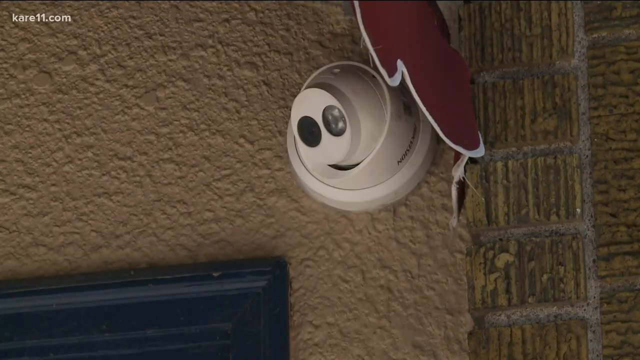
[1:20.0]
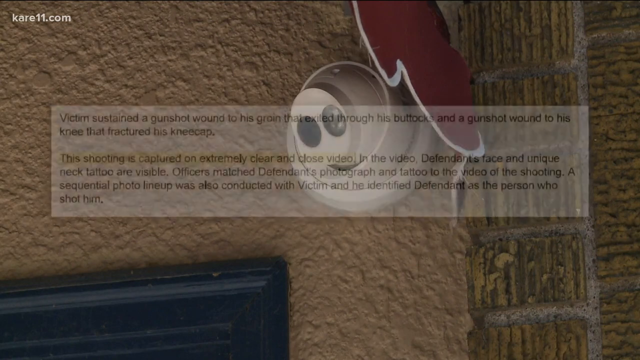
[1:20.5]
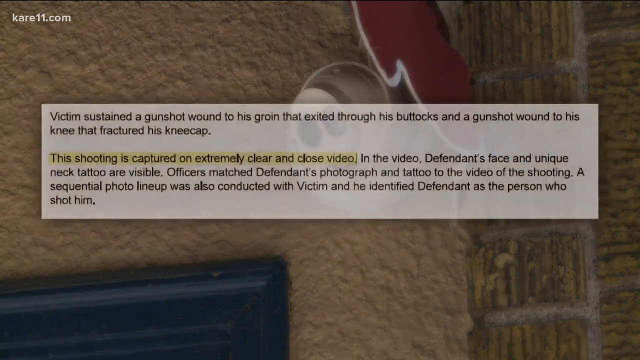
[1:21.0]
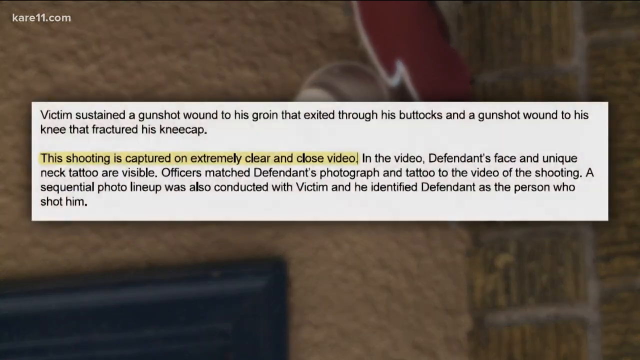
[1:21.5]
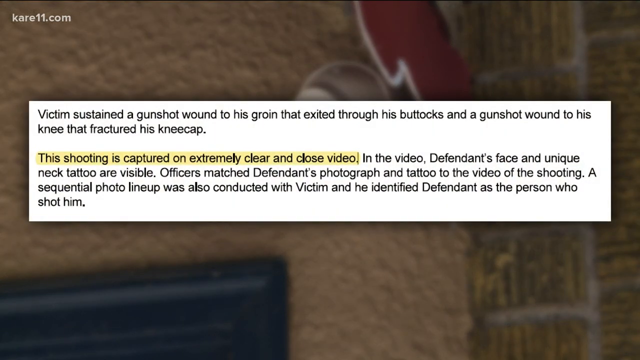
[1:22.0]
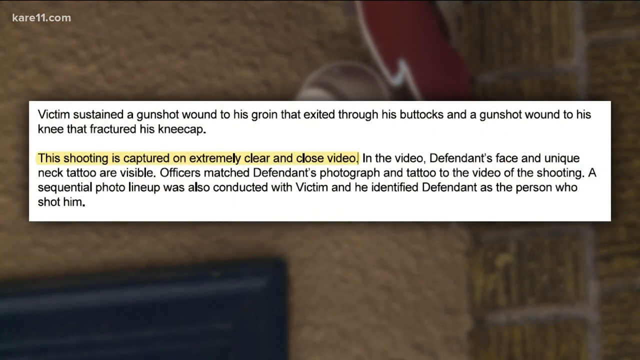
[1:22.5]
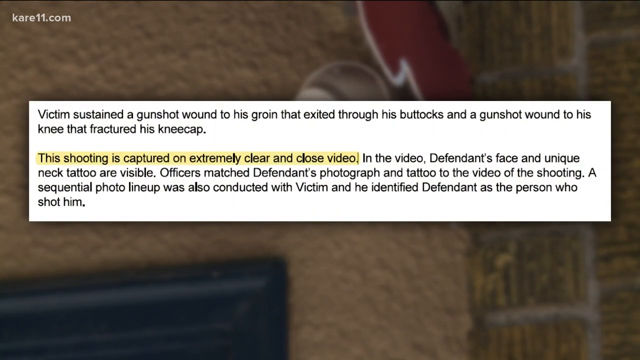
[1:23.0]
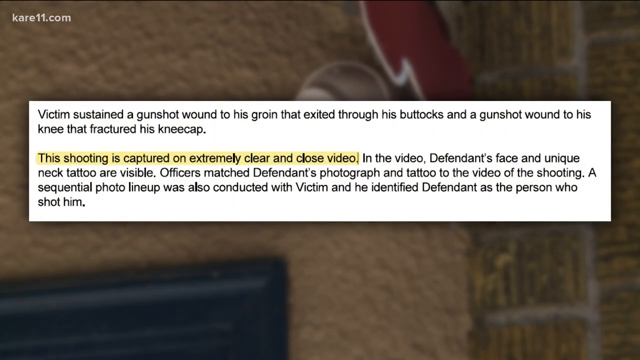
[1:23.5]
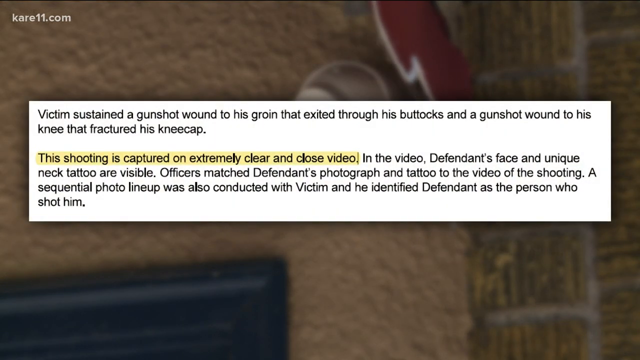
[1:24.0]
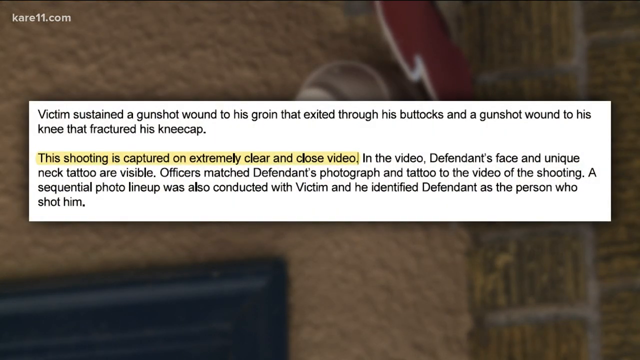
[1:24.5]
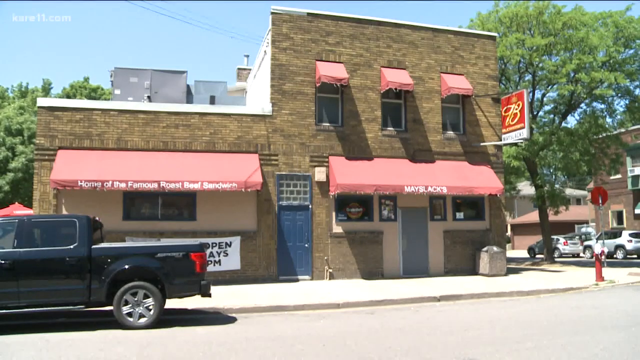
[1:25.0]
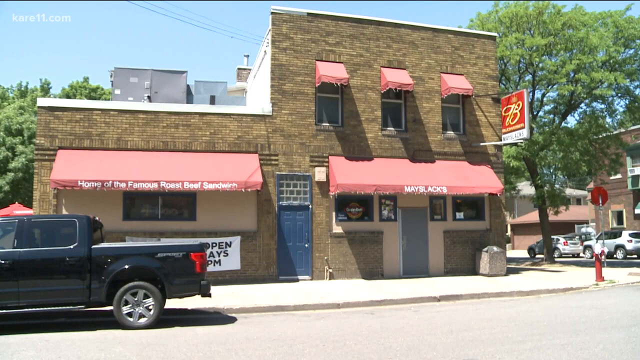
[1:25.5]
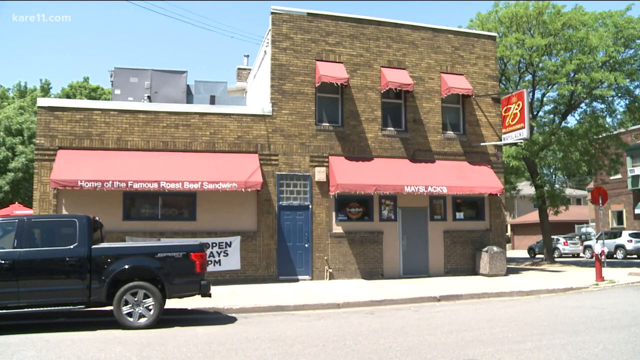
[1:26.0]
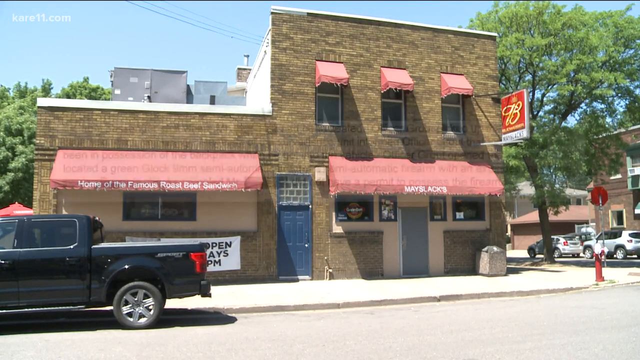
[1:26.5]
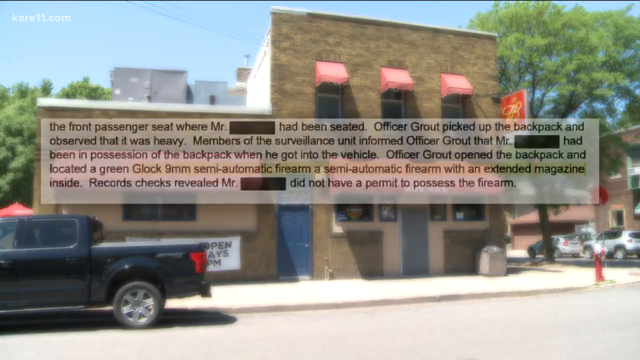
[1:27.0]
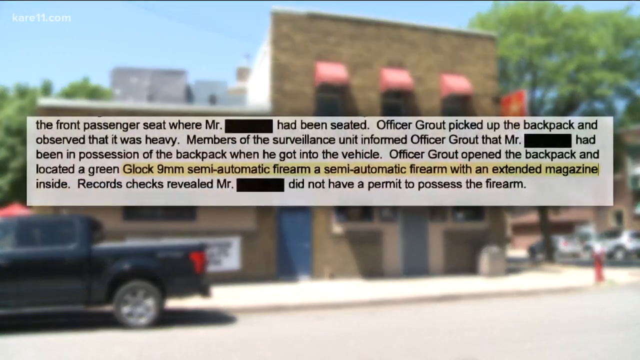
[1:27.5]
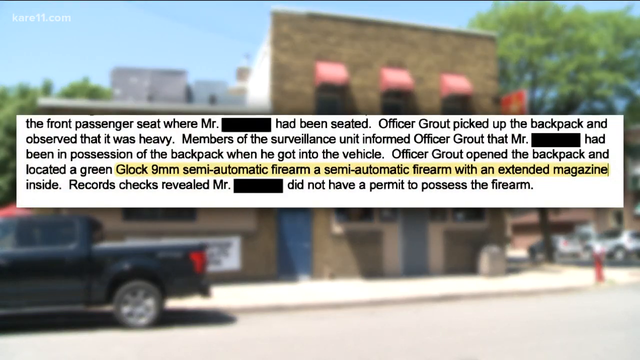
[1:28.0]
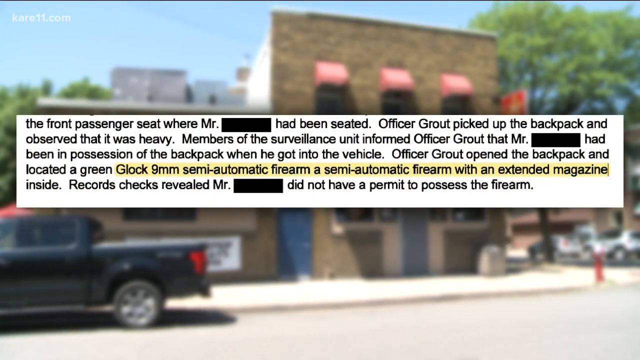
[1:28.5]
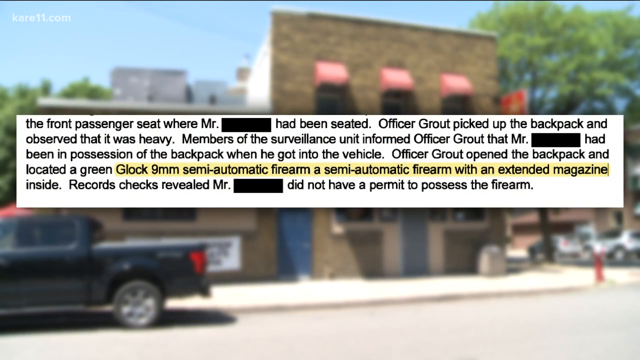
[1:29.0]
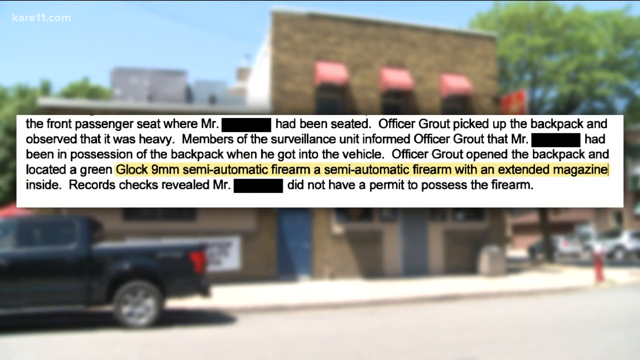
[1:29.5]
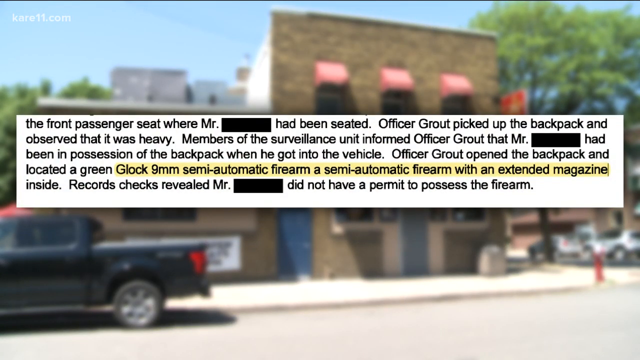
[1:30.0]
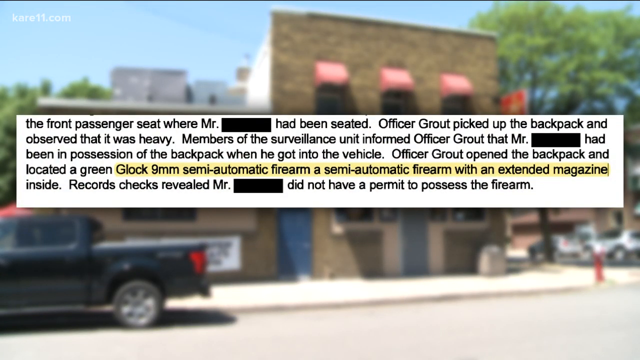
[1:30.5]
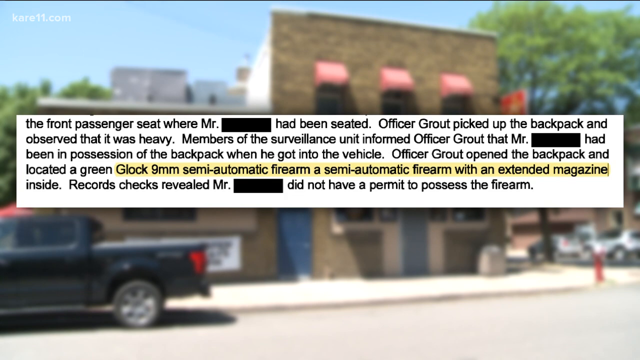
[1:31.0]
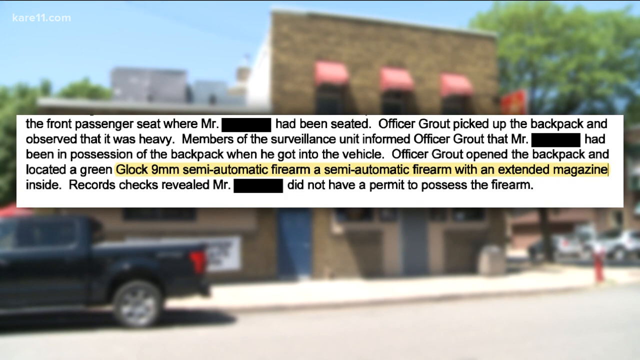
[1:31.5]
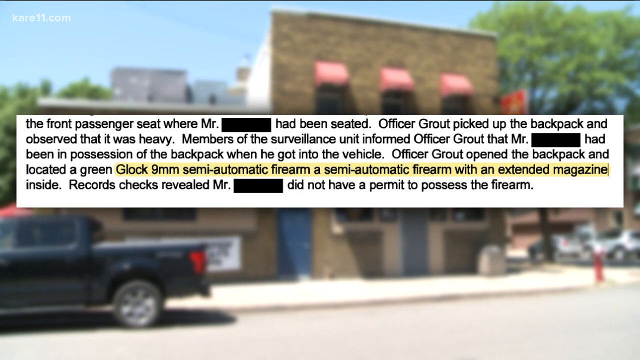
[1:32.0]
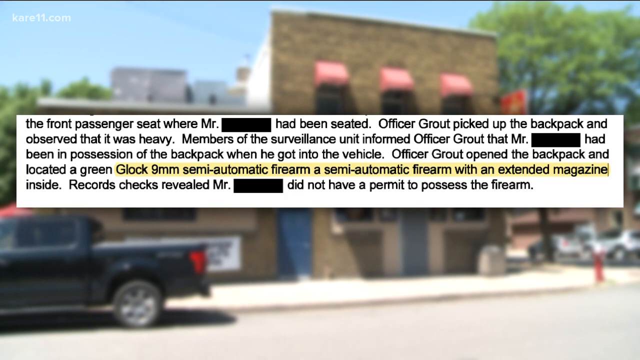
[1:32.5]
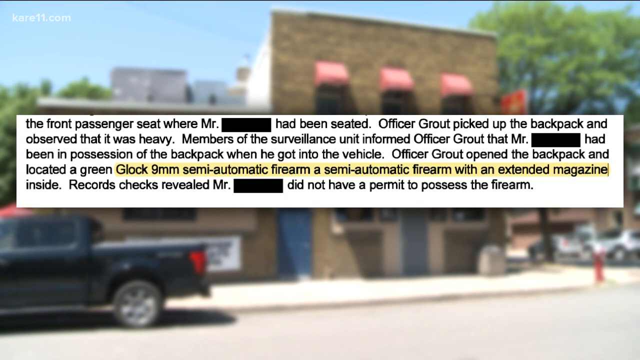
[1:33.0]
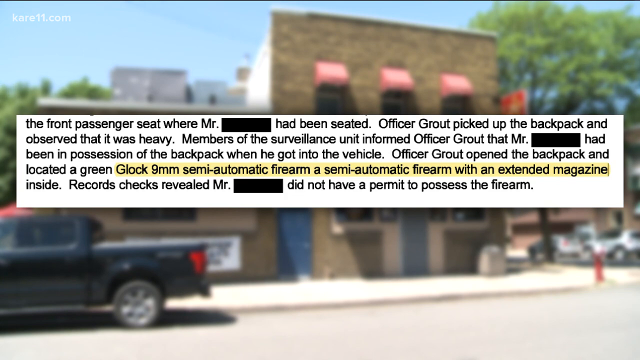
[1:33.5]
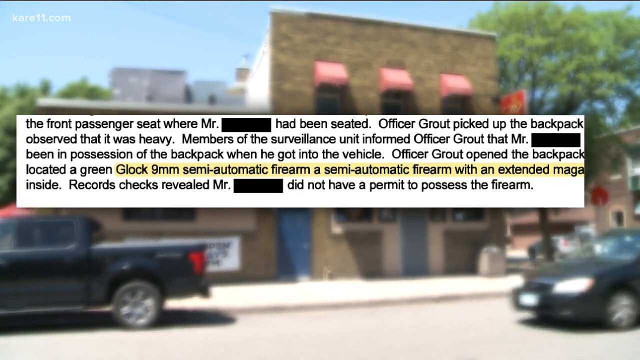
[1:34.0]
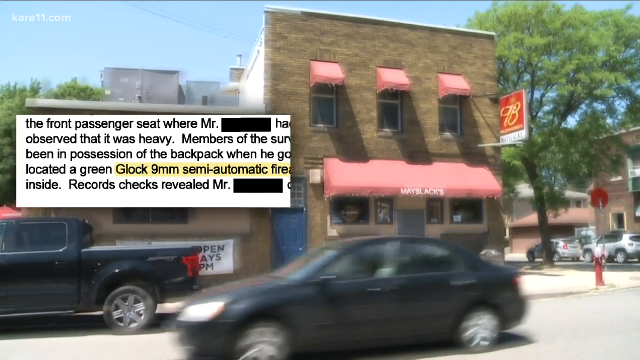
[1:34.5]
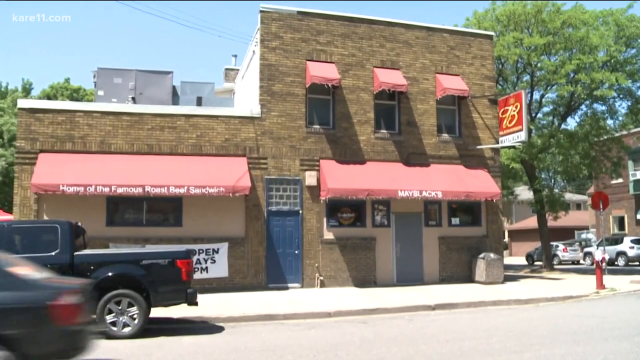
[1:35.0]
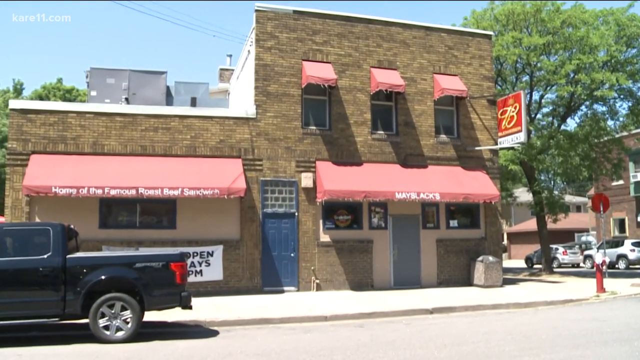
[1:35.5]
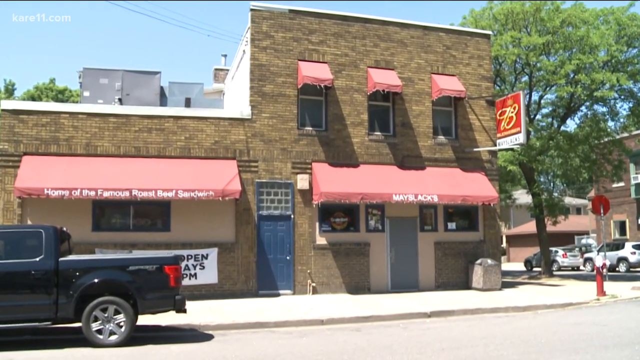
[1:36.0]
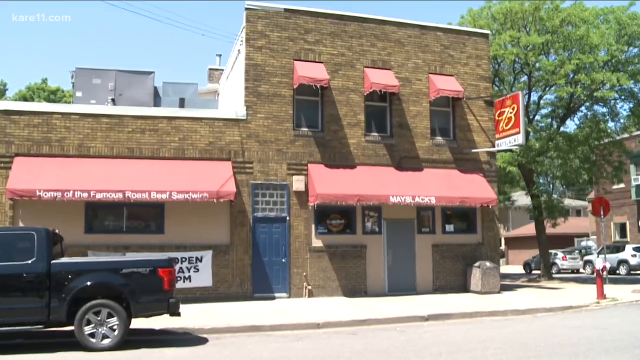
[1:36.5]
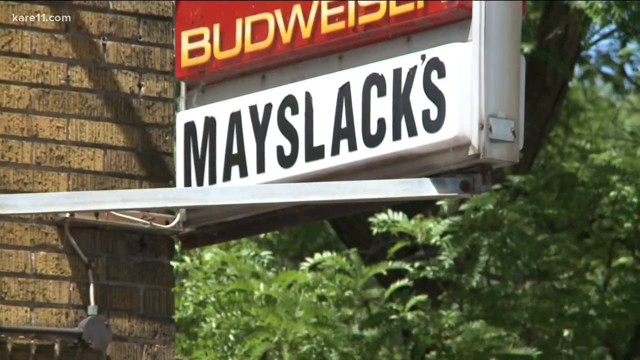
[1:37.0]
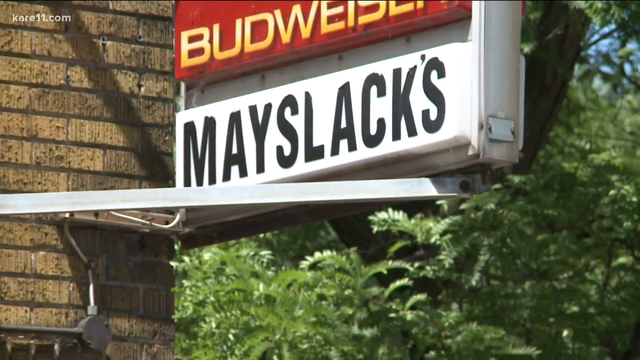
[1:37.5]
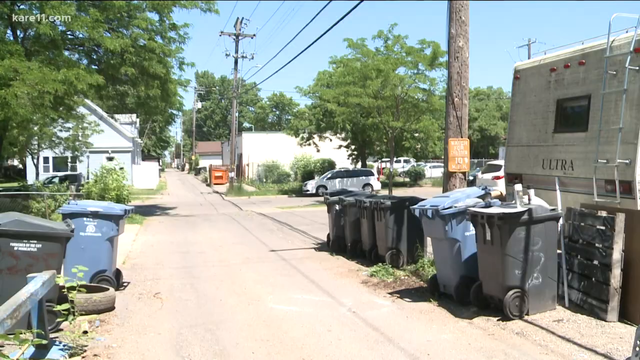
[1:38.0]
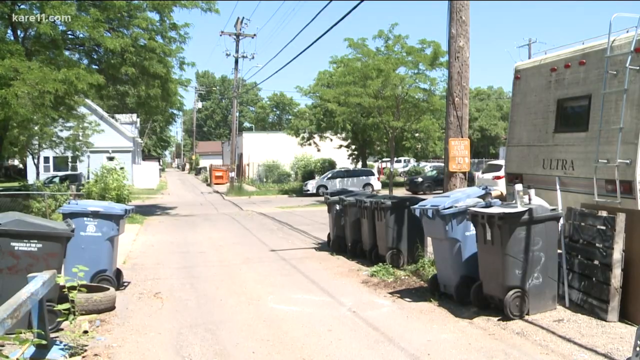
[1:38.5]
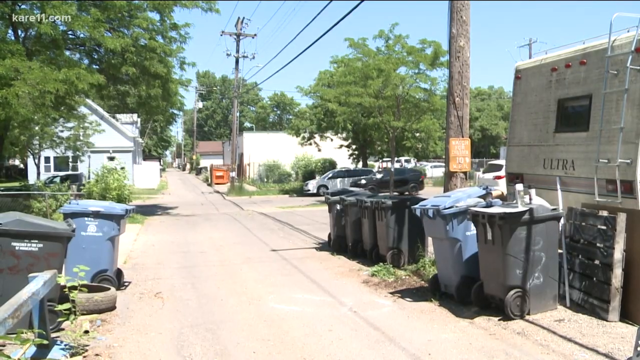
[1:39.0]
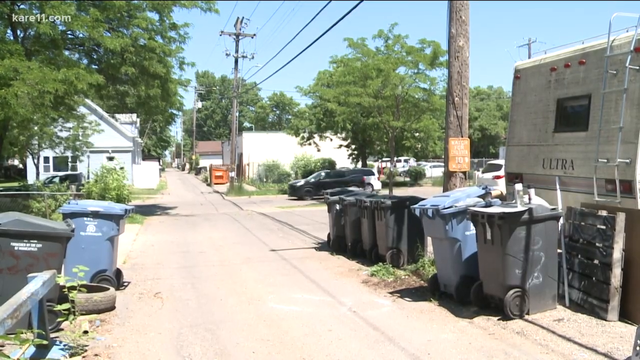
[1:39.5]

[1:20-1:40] The camera in the right corner of the bar is shown. Text in black font on a white background then appears, describing the victim's gunshot wounds, including one that exited through his buttocks and a gunshot wound to his leg that fractured his kneecap. A sentence about the shooting being captured "on extremely clear and close video" is highlighted in yellow. The text goes on to mention the defendant's unique neck tattoo, officers matching the defendant's photograph and tattoo to the video of the shooting, and a photo lineup conducted with the victim, who identified the defendant. More text then pops up about the front passenger seat, where a man whose name is redacted had been seated, someone picking up a backpack and observing that it was heavy, members of a surveillance unit, a green 10 millimeter semi-automatic firearm found in the backpack, and checks revealing that the man, whose name is removed, did not have a permit to possess the firearm.